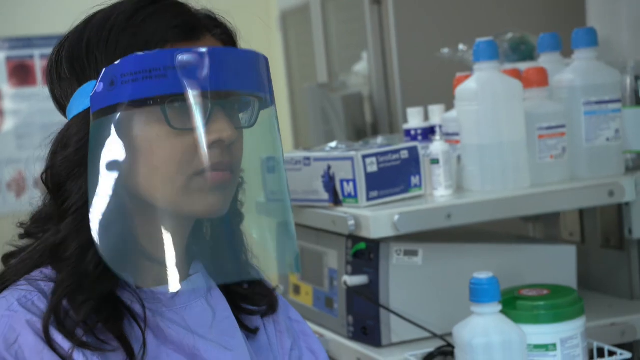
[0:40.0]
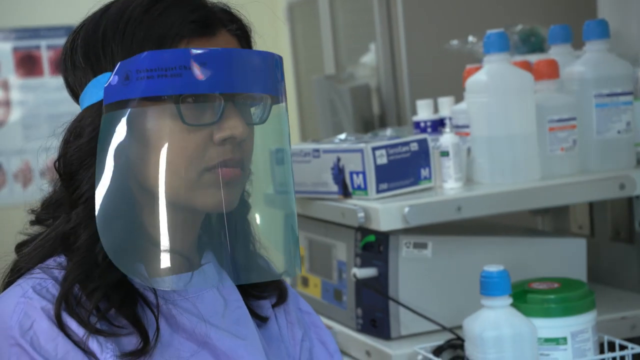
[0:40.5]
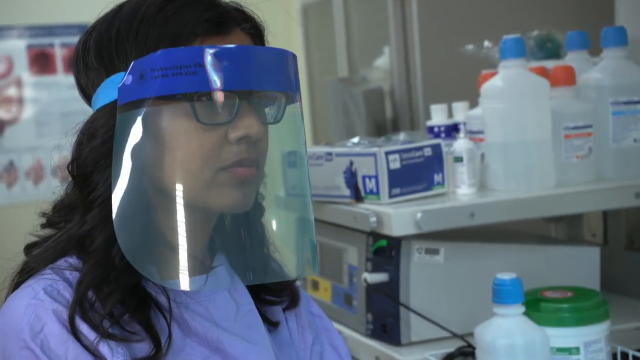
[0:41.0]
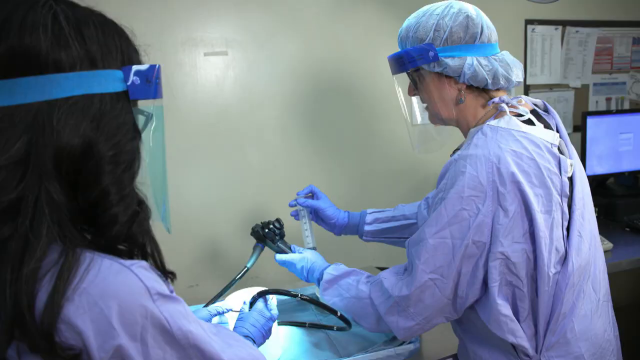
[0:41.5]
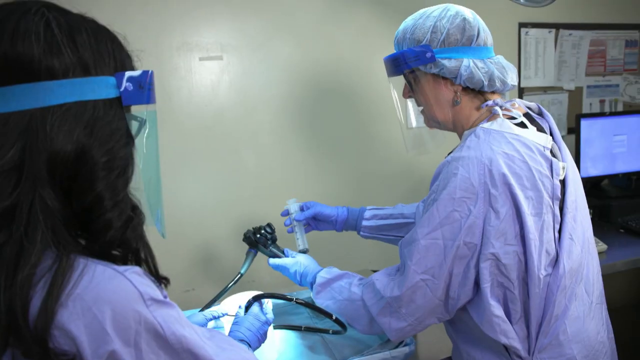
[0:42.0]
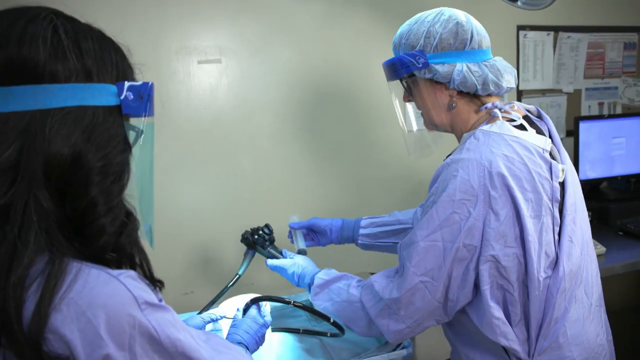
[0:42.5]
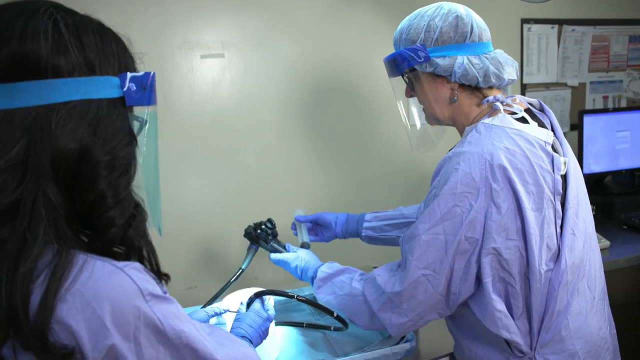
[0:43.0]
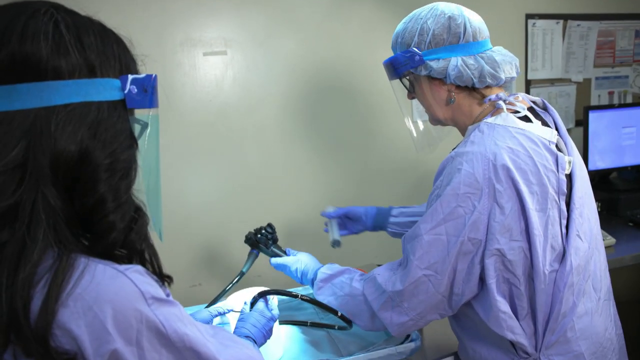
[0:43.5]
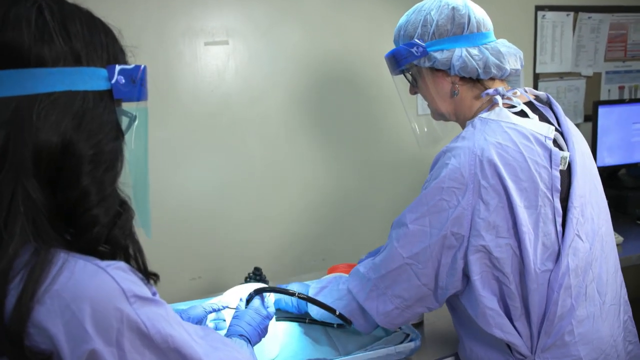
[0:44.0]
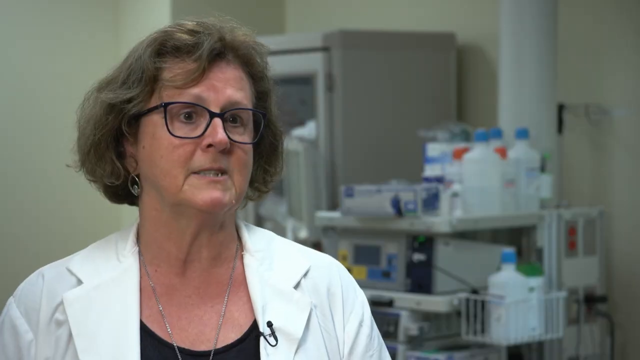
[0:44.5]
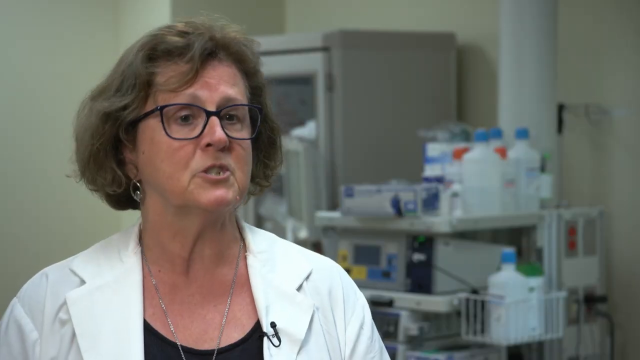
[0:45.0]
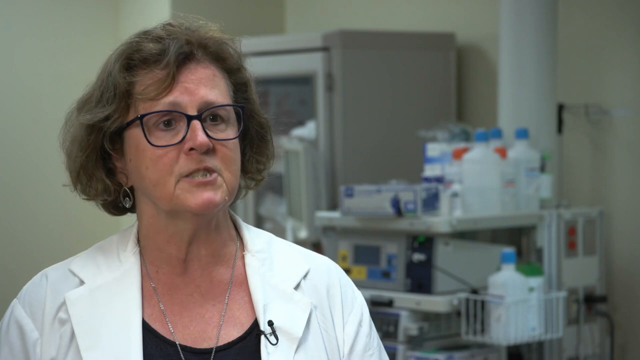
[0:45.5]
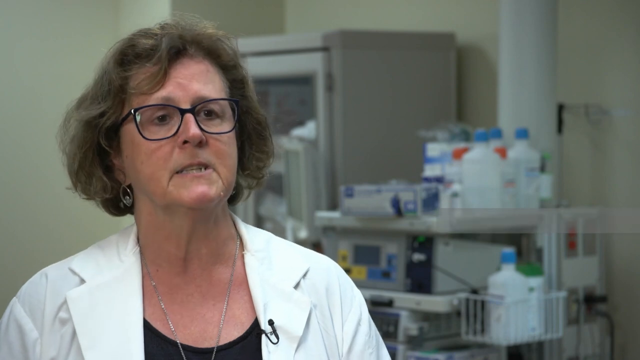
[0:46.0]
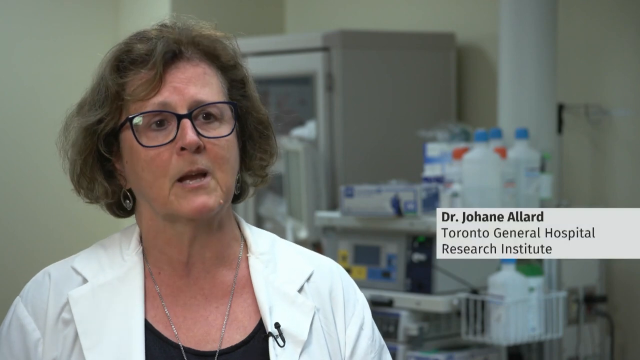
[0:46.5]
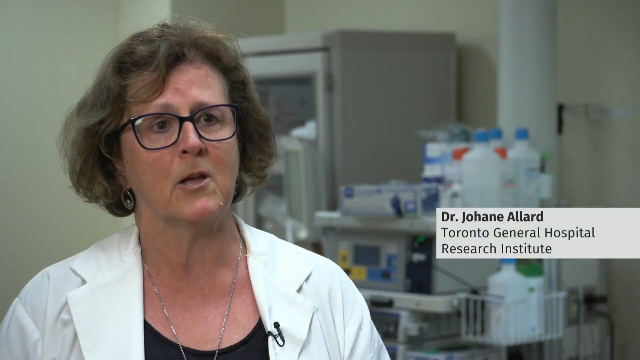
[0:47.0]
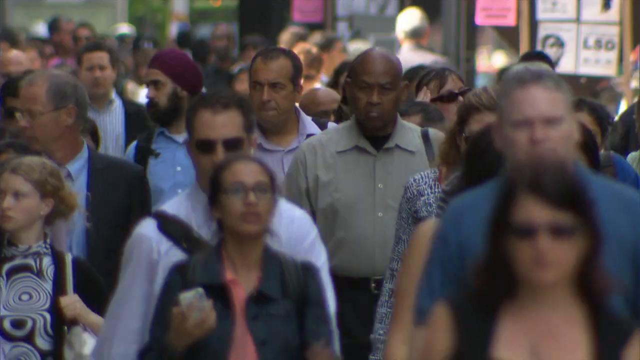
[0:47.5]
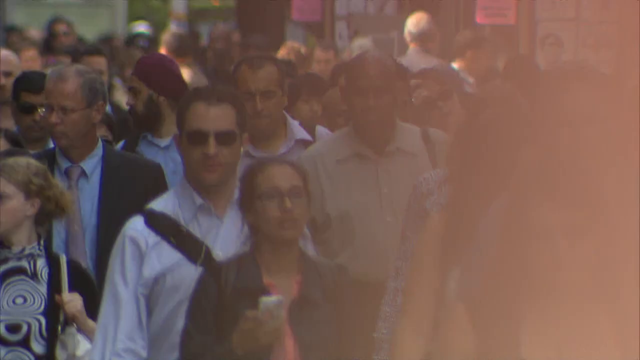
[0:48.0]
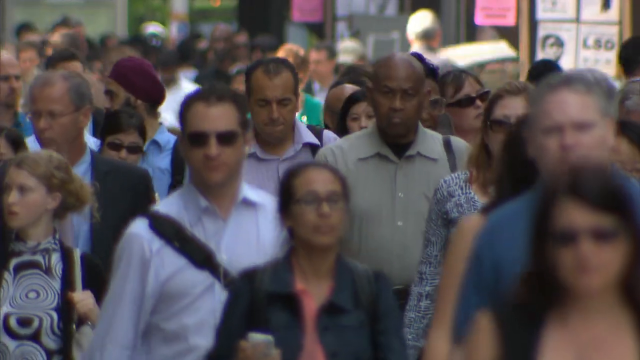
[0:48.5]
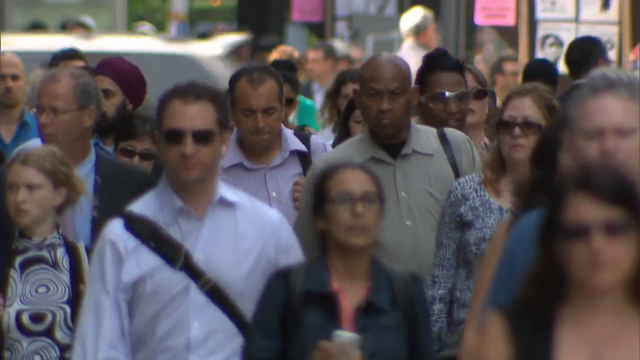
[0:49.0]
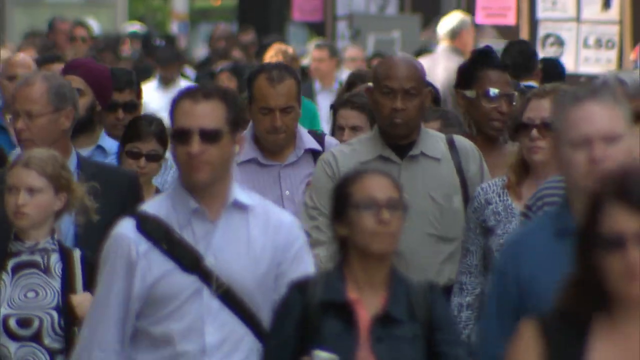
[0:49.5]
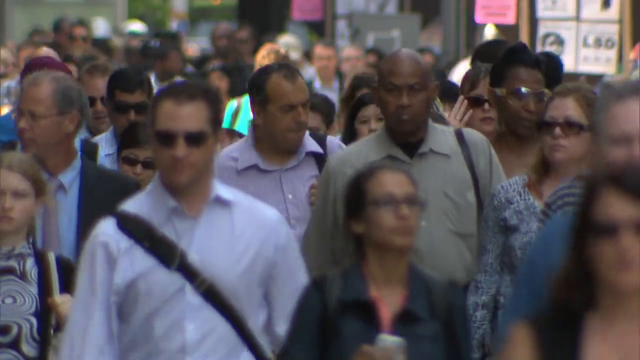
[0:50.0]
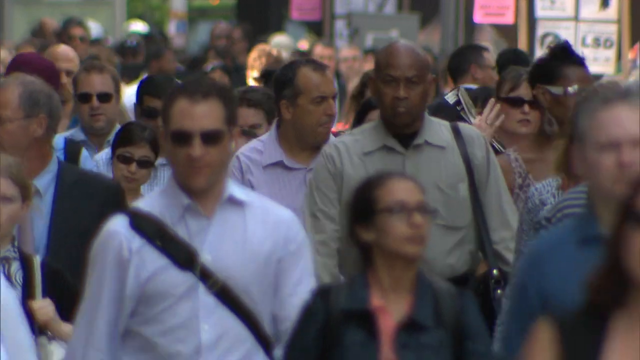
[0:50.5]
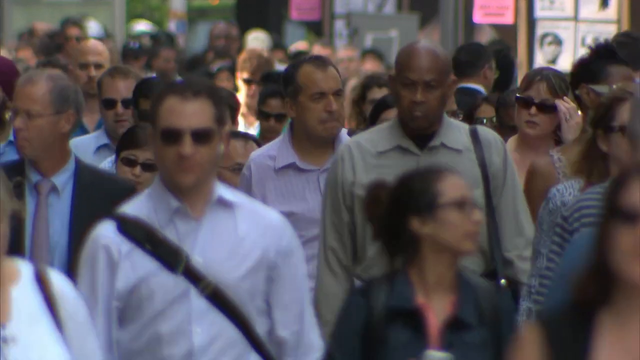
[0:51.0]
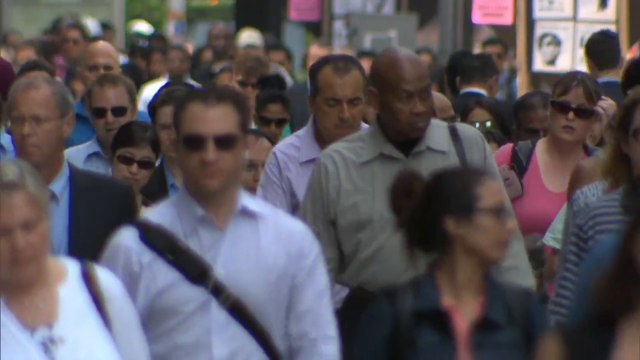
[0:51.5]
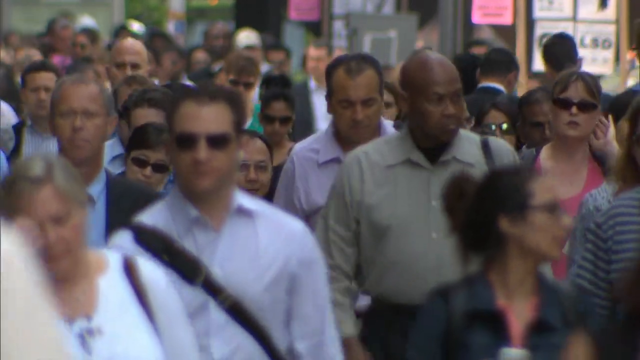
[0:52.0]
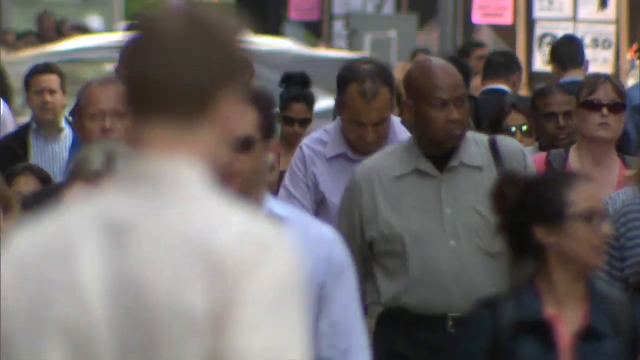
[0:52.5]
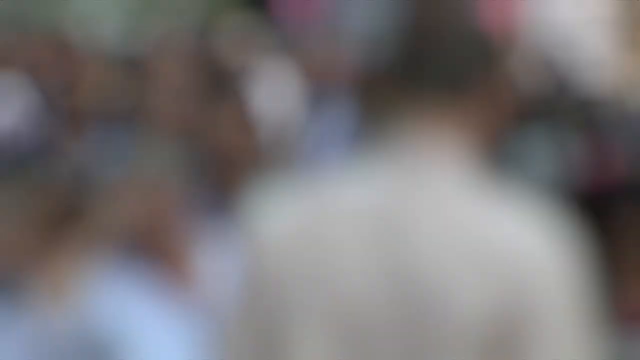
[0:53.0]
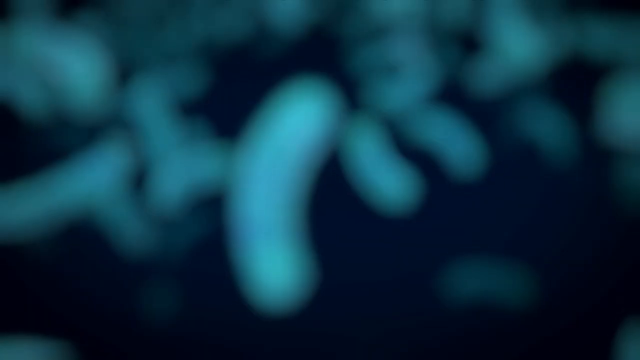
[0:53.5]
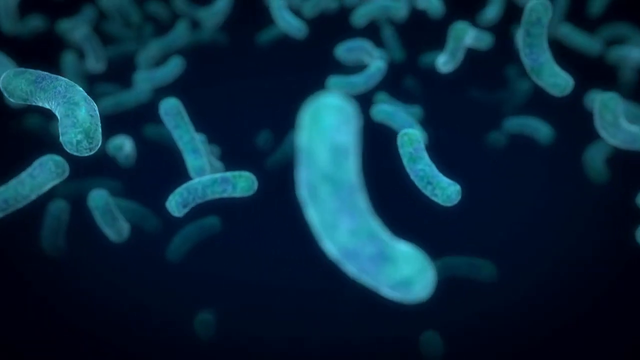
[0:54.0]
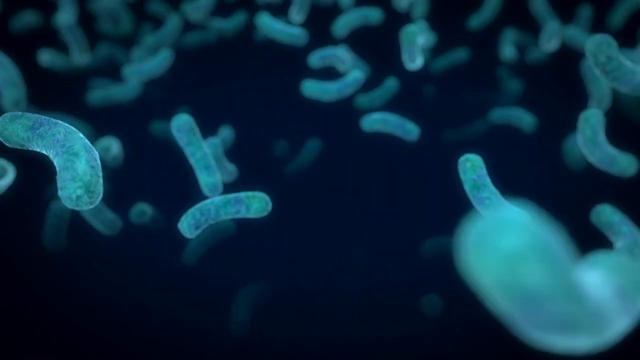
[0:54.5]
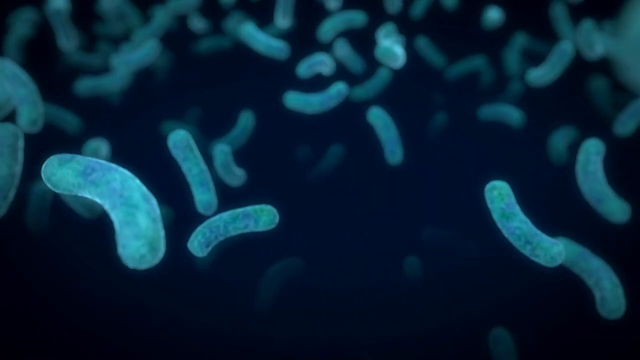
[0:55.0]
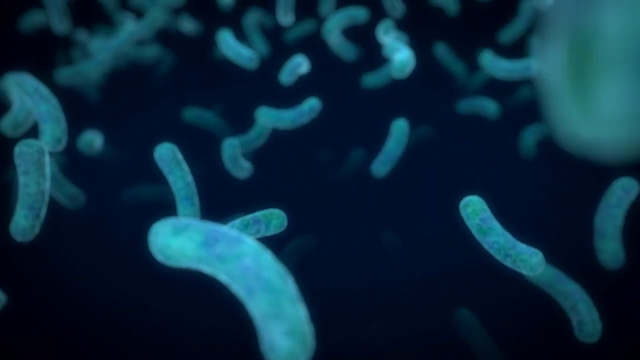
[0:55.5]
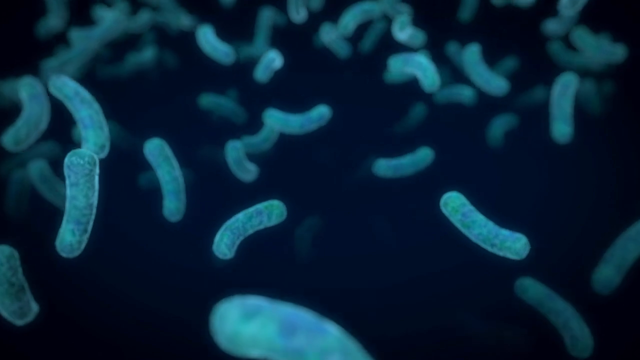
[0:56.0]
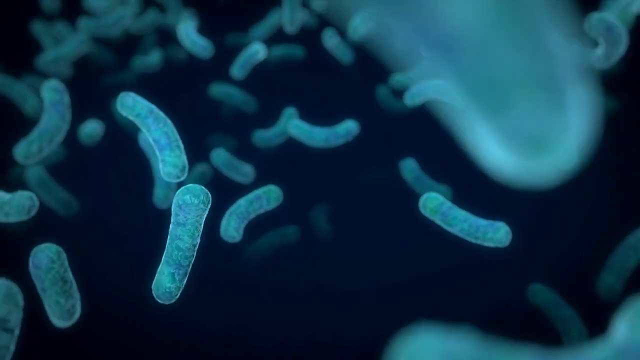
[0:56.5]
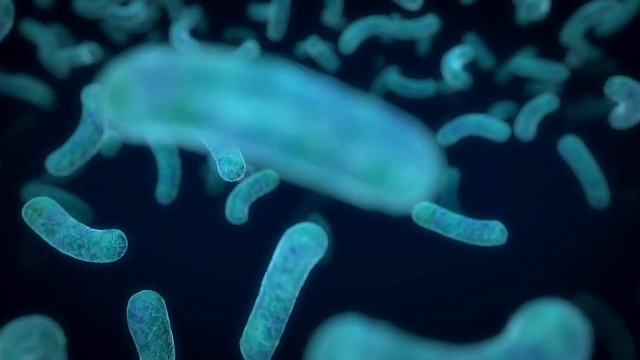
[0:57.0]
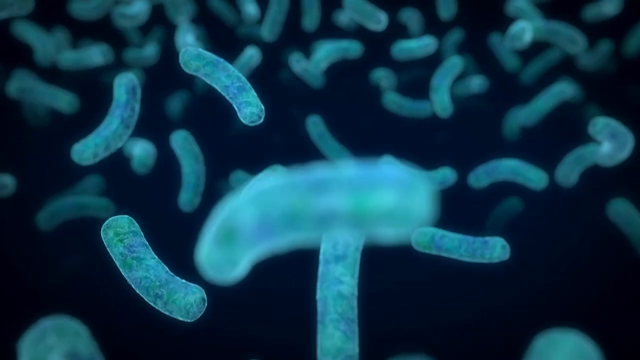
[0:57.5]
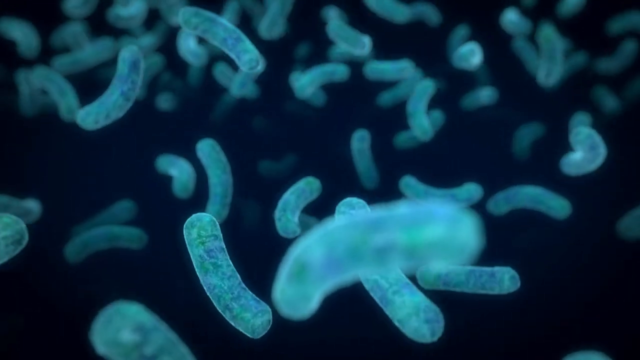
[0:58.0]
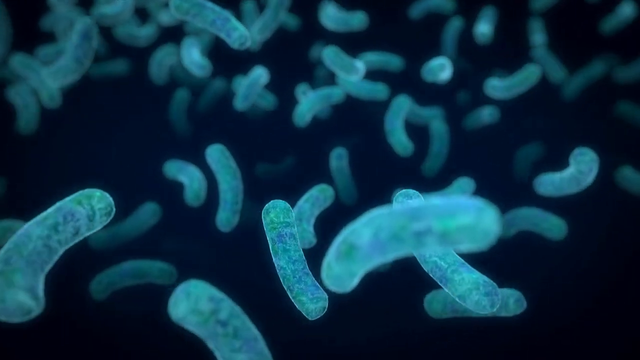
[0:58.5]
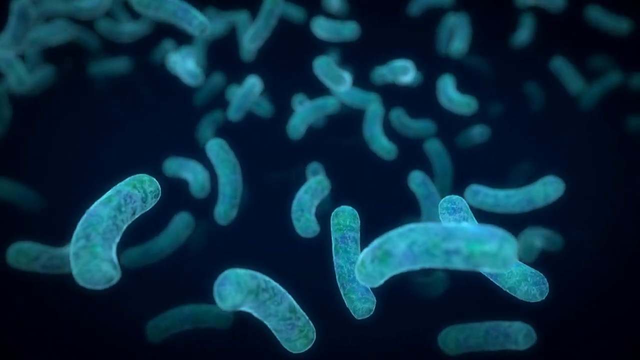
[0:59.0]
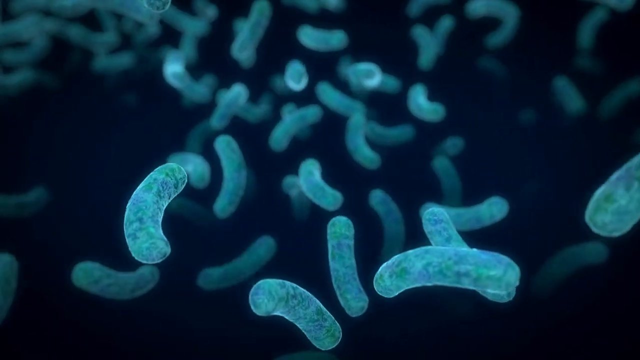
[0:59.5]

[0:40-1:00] A close-up shows the doctor who was on the left, wearing her face mask, blue overalls and glasses, with brown hair. She nods towards the doctor who was using the syringe. Behind her is a variety of medical equipment, including some rubber gloves and some clear bottles with liquids and blue lids. She nods her head several times, and then the camera angle changes. The other doctor has finished transferring the fluid from the syringe; she still holds the black piece of equipment with the wire attached in her left hand and the now-empty syringe in her right. She removes the syringe and places both hands down simultaneously, setting the black item and the syringe down in front of her. The scene changes to an interview-style setting with a cabinet, a green wall and some medical equipment in the background. A woman talks towards the camera, tilting her head slightly to the right as she talks. She wears white overalls with a black top, a necklace, earrings and glasses, and has brown hair slightly shorter than shoulder length. A small black microphone is attached to the collar on her left lapel. As she speaks, a white text box briefly appears on the right-hand side of the screen with black text reading "Dr. Johann Allard, Toronto General Hospital Research Institute". Next is a general shot of many people of various races and ethnicities walking down a street outside; a lot of them wear shirts, but it is a bit of a mix. A car passes by in the background, then another. The video then shows luminous blue bacteria floating around on a kind of black background, moving in several different directions.